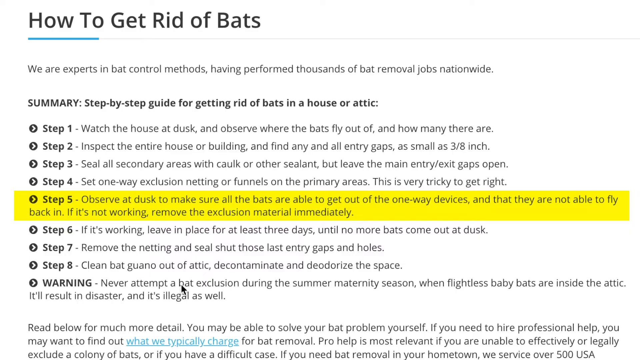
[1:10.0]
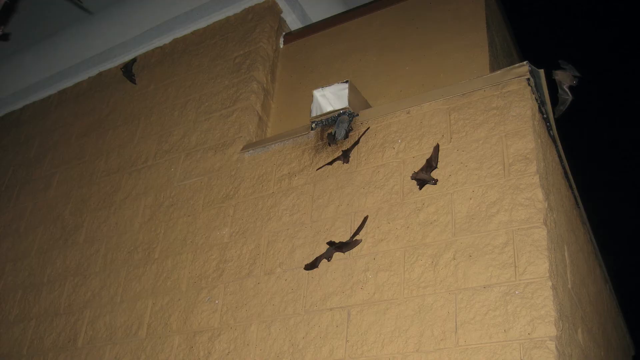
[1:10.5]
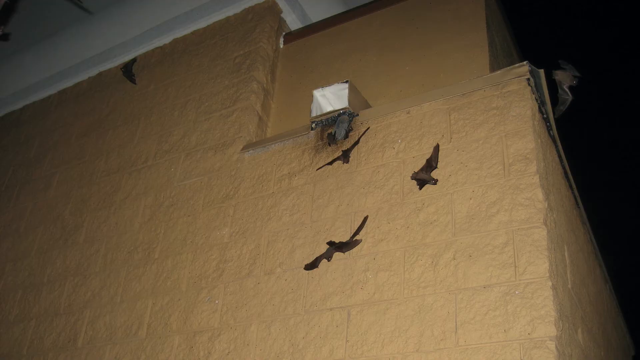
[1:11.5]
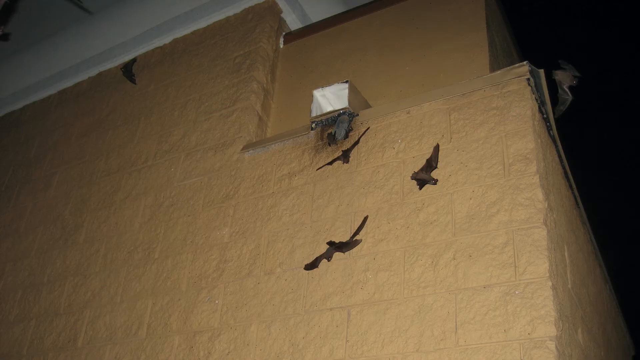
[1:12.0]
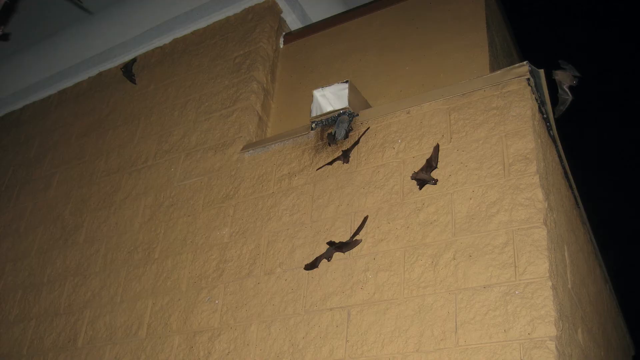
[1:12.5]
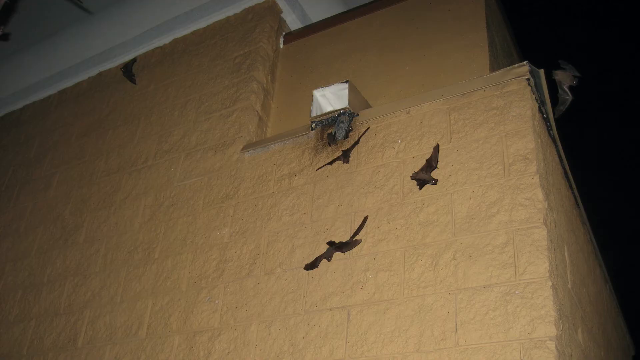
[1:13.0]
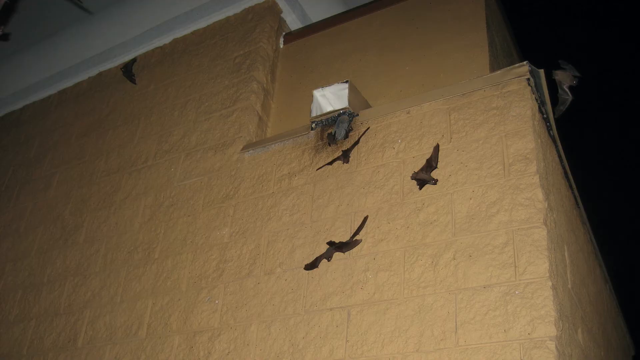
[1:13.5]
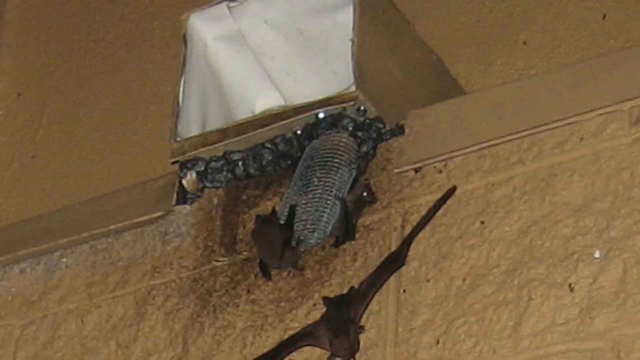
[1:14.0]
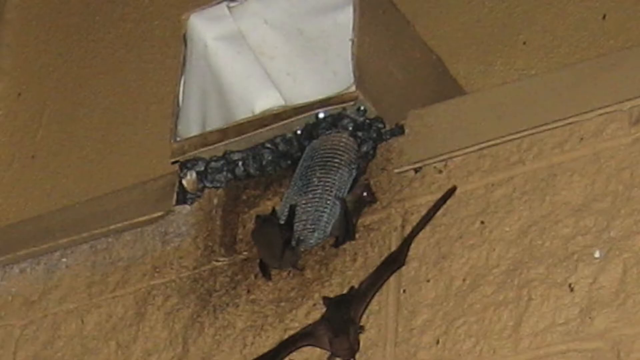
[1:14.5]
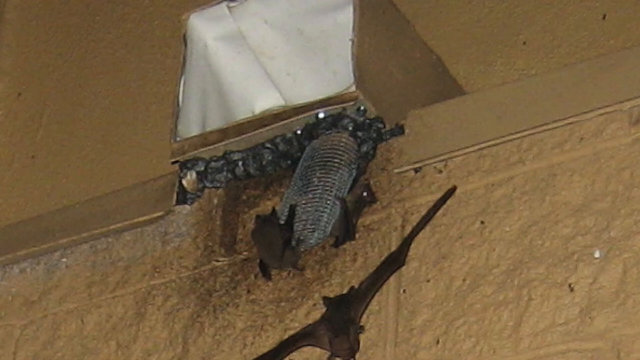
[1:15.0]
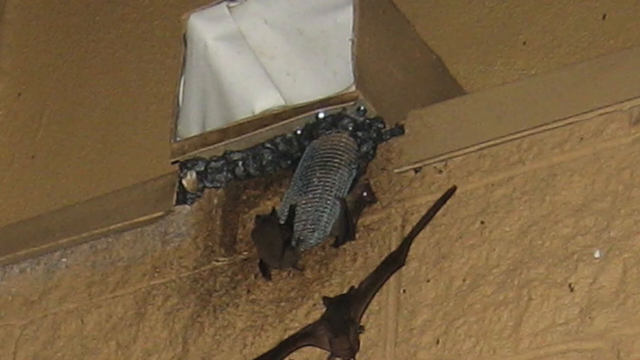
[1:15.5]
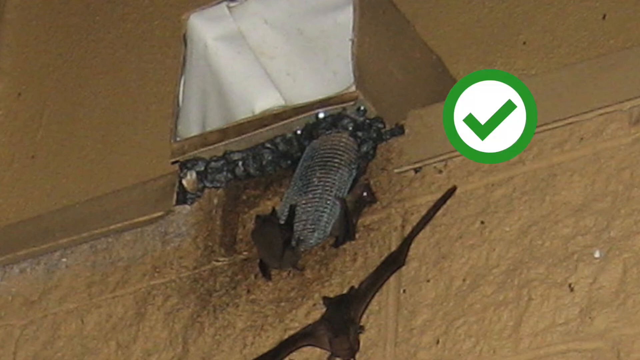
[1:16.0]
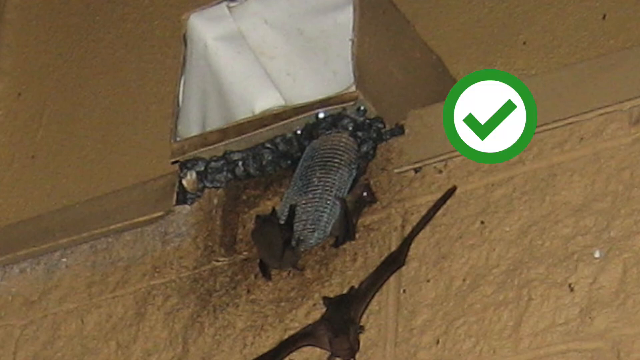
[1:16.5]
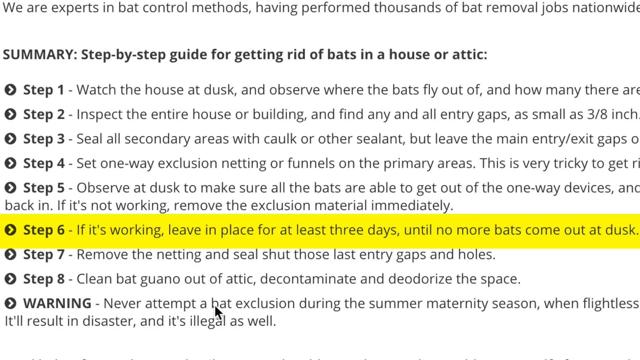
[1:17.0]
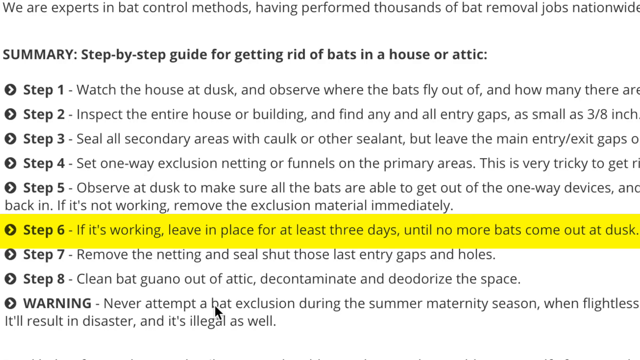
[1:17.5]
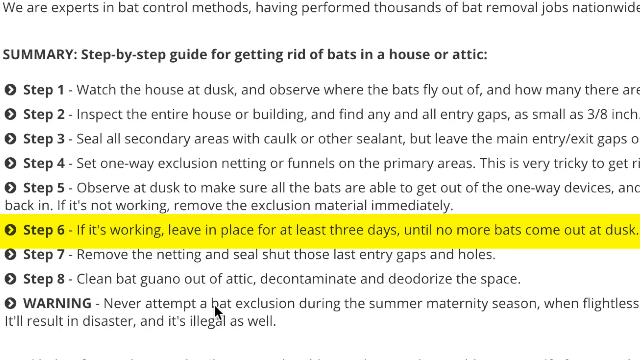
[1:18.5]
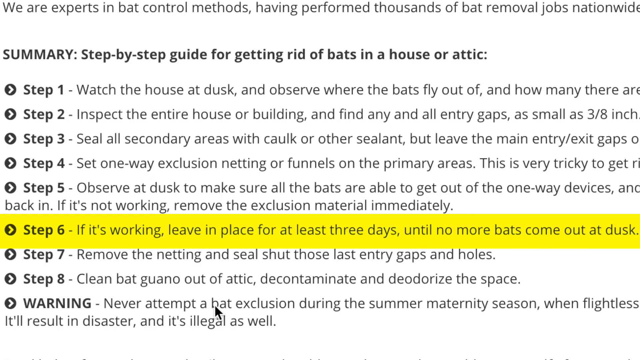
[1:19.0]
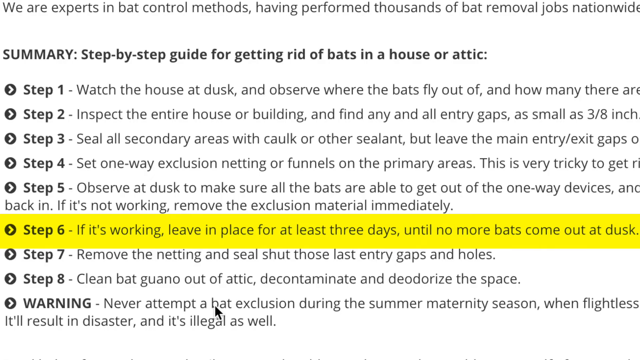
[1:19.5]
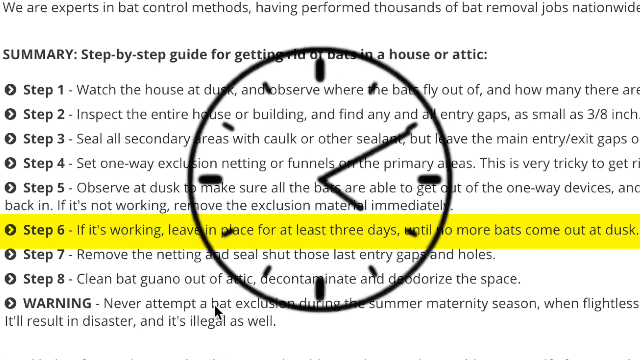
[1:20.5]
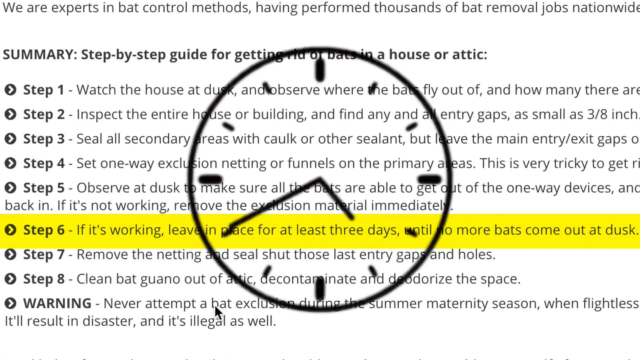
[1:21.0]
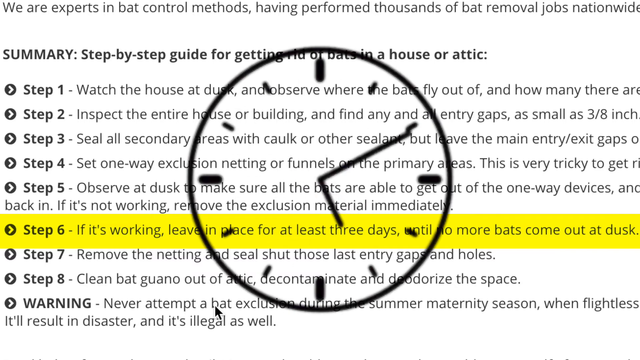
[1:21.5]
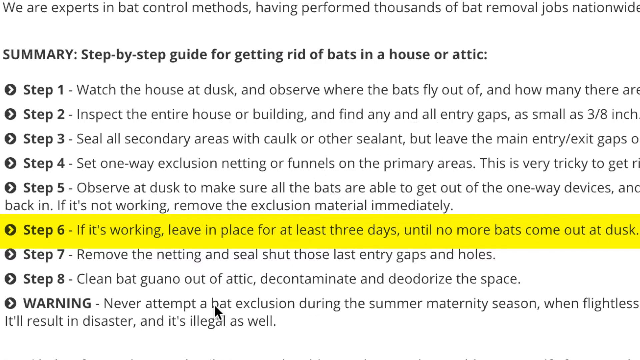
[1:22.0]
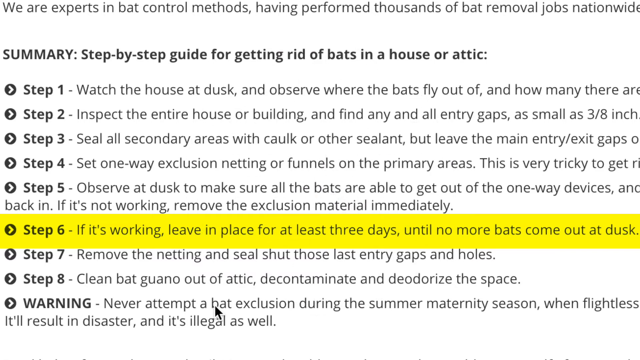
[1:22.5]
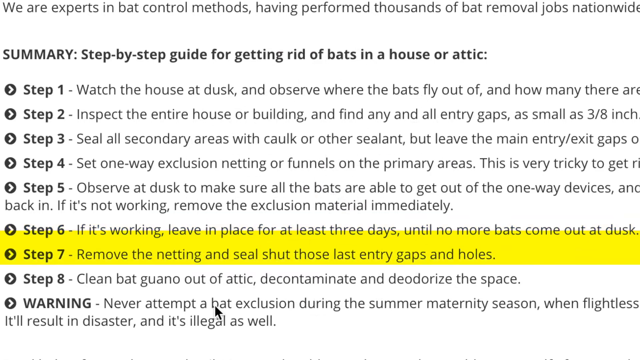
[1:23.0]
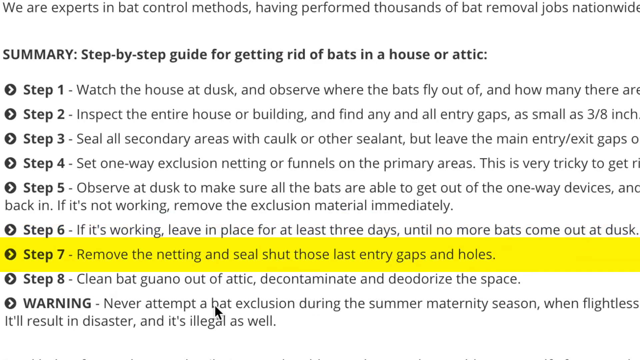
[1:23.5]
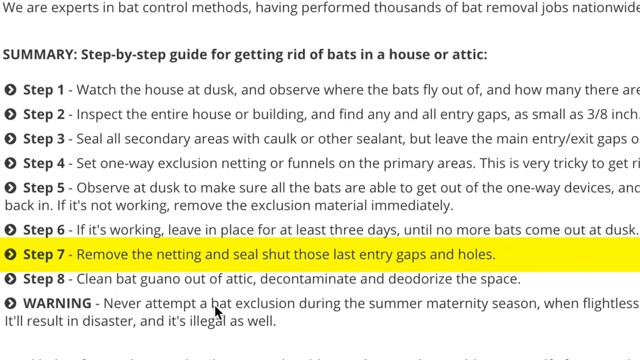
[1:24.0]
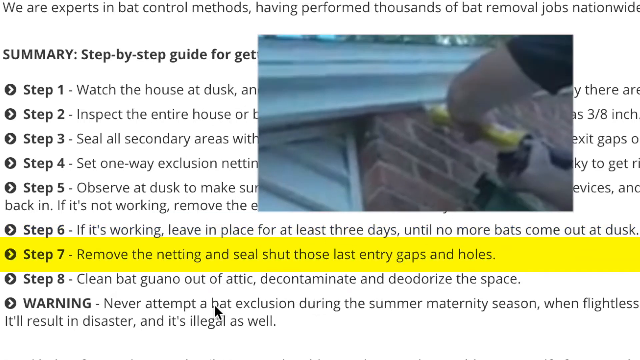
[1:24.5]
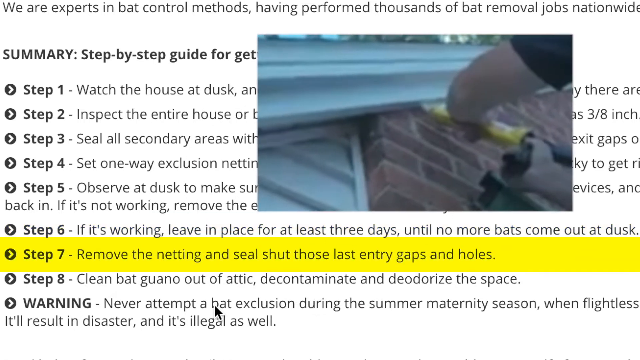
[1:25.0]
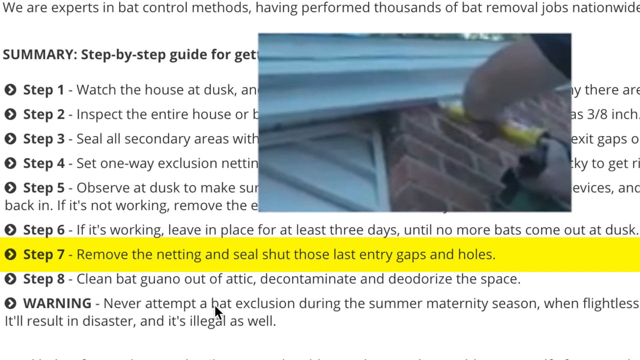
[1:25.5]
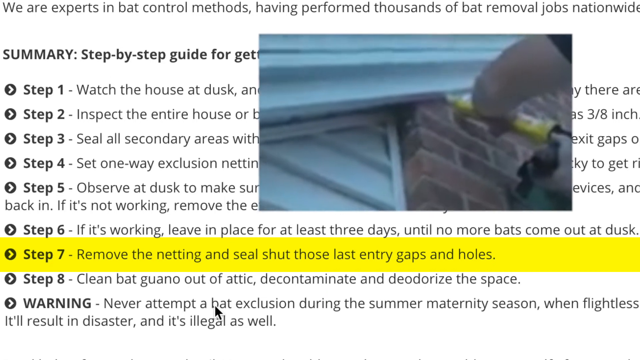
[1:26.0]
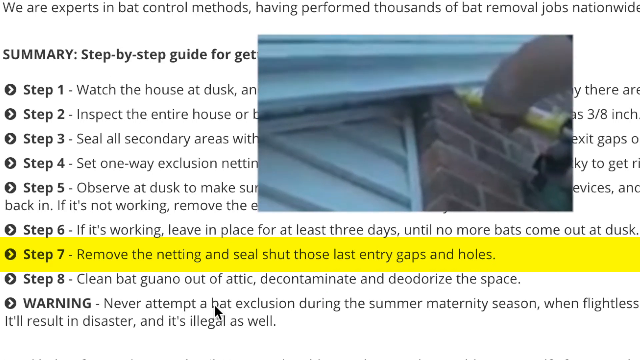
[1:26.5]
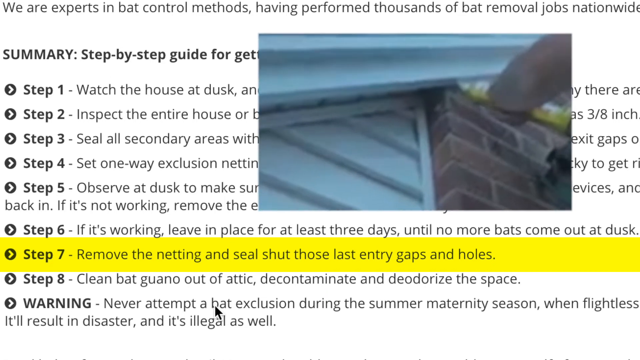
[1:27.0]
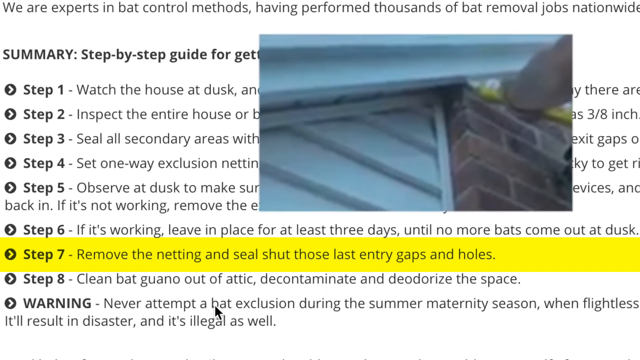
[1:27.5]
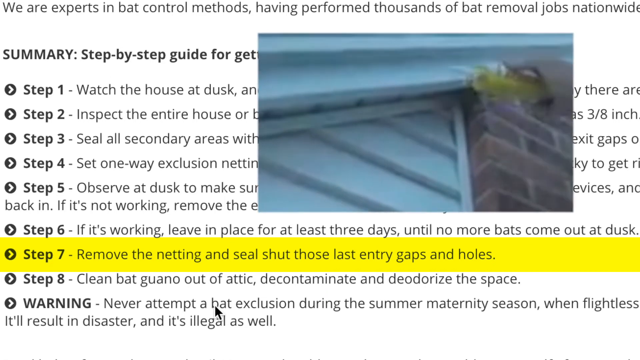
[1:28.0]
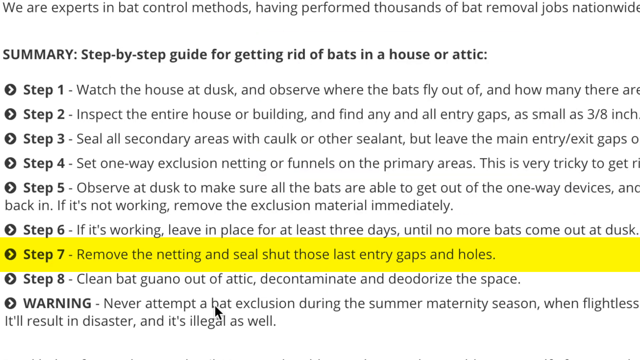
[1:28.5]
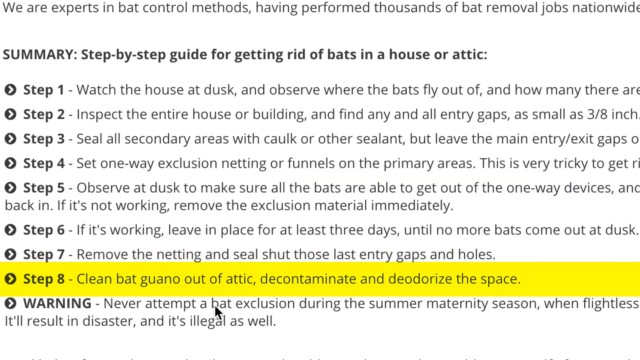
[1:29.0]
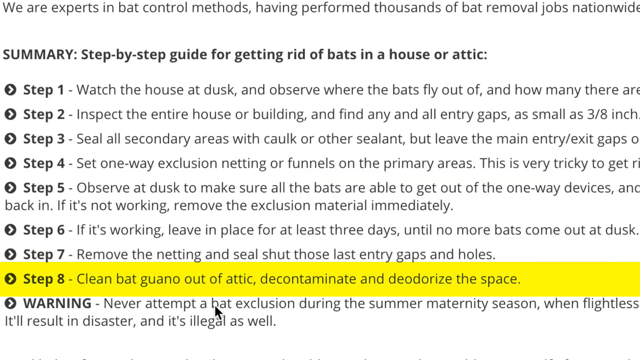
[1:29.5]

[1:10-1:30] At the observing step, bats fly around at dusk. They go onto the netting tube and cling to its outside. A green circle with a white check mark in it appears, apparently indicating this is what they are supposed to be doing. Step six reads: if it's working, leave in place for just three days until no more bats come out at dusk. A translucent clock in the middle of the steps has hands going around very quickly, counting down the time. Step seven is to remove the netting and seal shut those last entry gaps and holes. In a pop-up window on top of the steps, a man is up on the ladder; only his left arm is visible as he holds the tubing with caulking in it, moving the caulking down to seal the area where the bats were previously getting in. Step eight is to clean the bat grano out of the attic, decontaminate and deodorize the space.